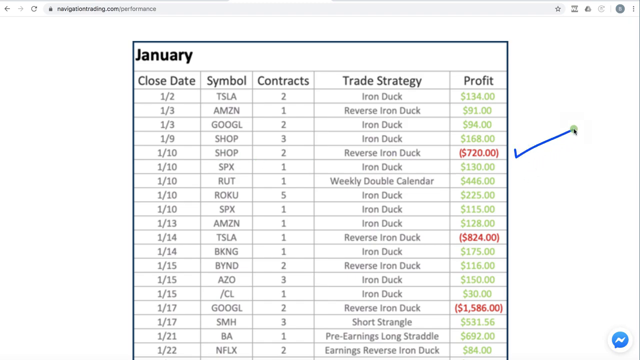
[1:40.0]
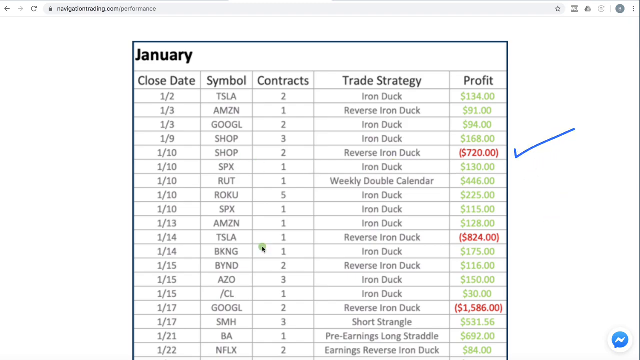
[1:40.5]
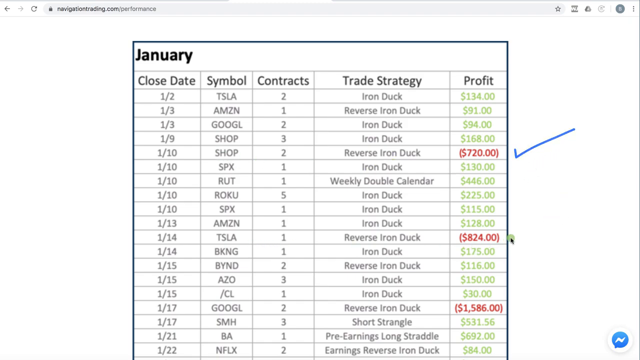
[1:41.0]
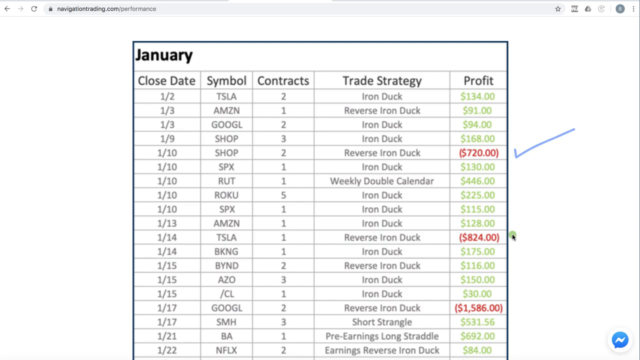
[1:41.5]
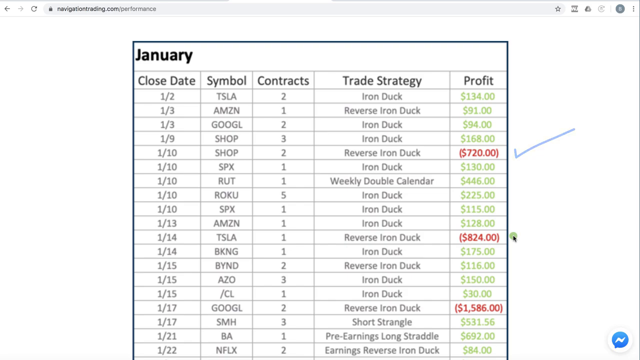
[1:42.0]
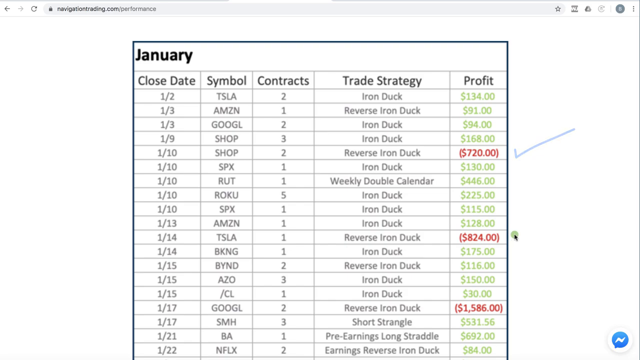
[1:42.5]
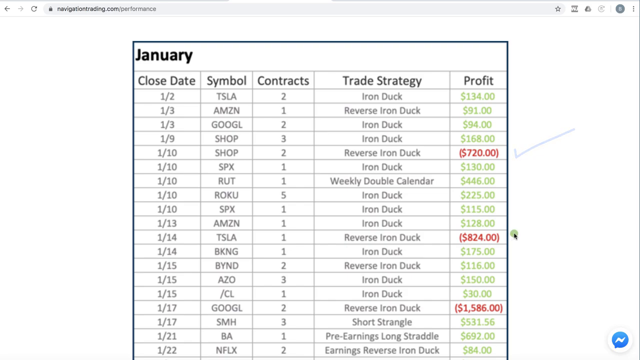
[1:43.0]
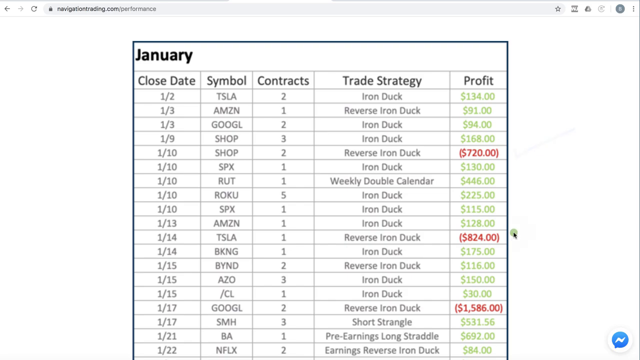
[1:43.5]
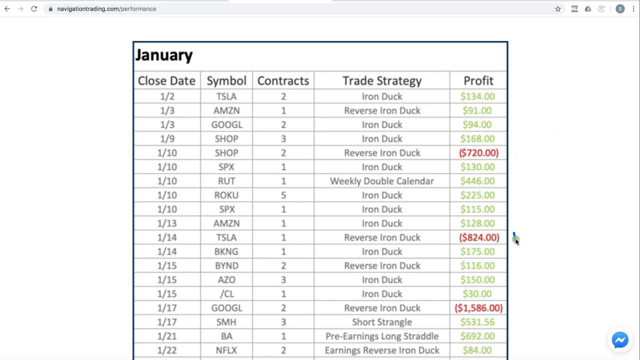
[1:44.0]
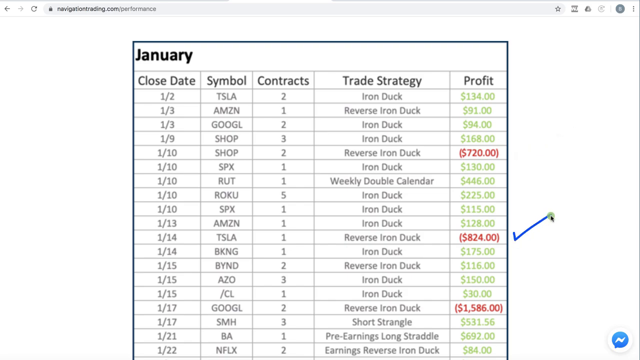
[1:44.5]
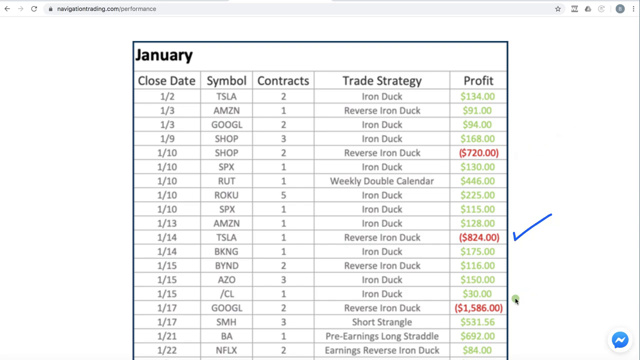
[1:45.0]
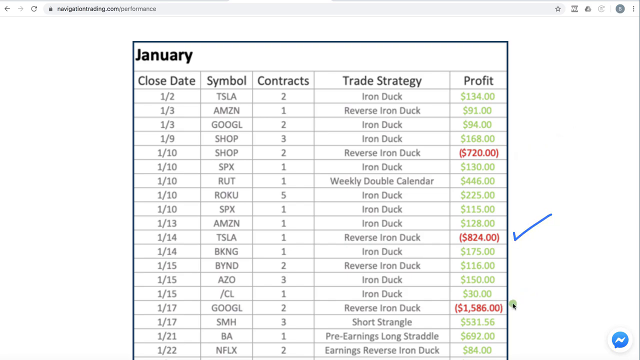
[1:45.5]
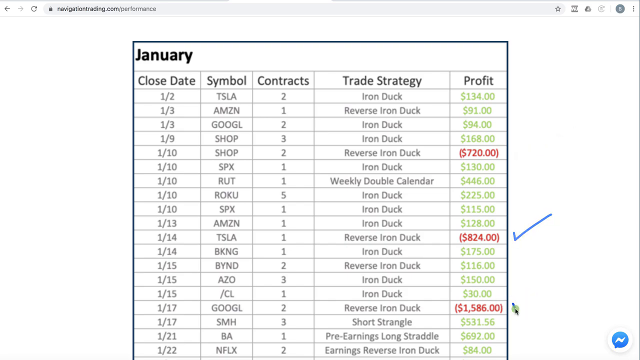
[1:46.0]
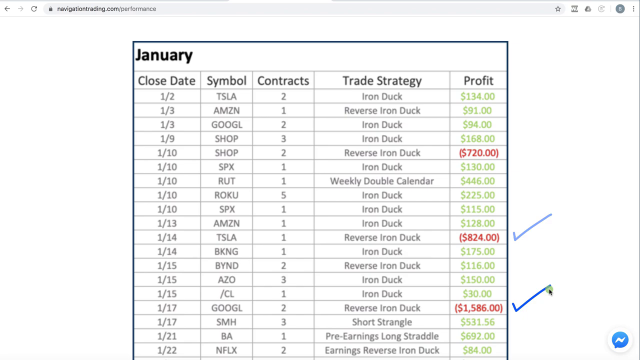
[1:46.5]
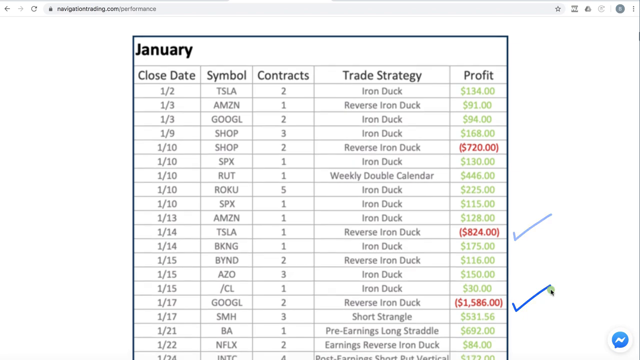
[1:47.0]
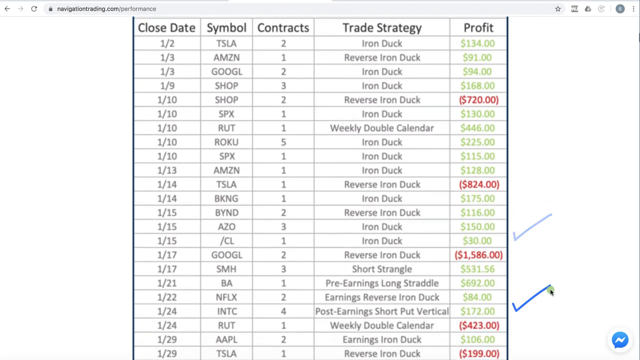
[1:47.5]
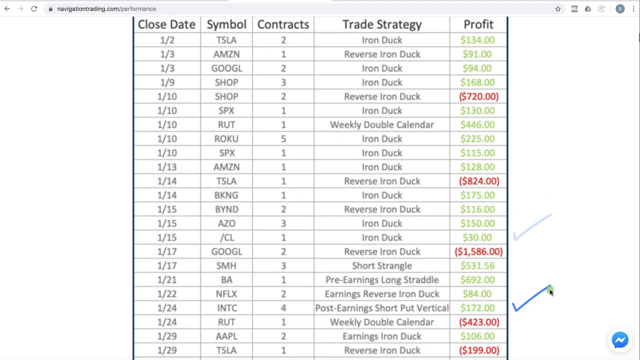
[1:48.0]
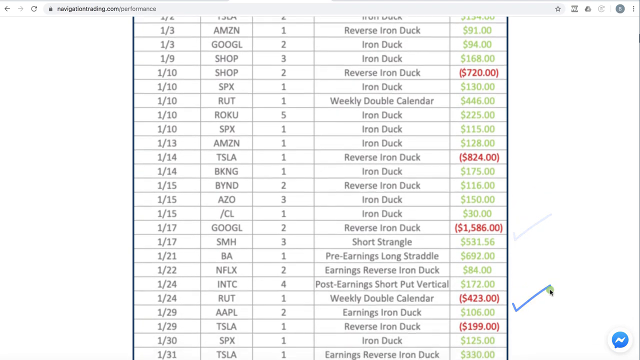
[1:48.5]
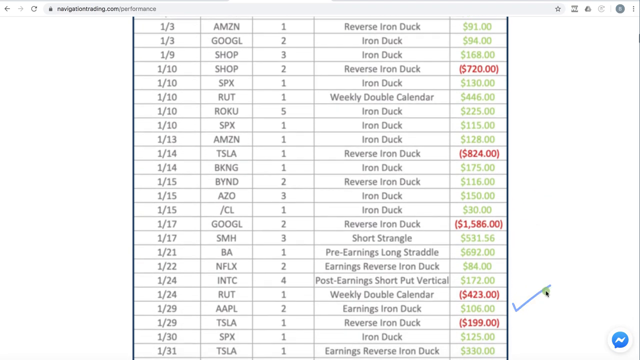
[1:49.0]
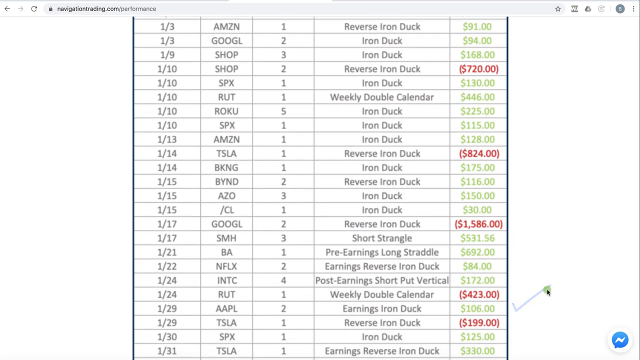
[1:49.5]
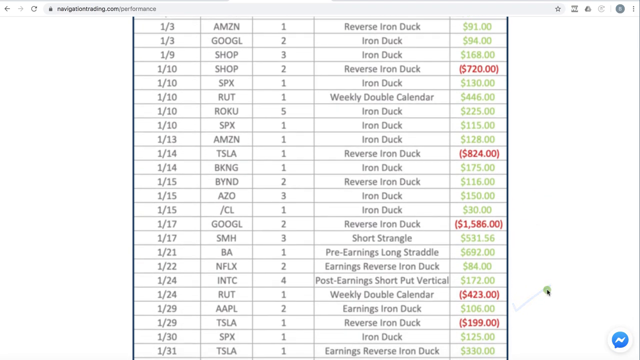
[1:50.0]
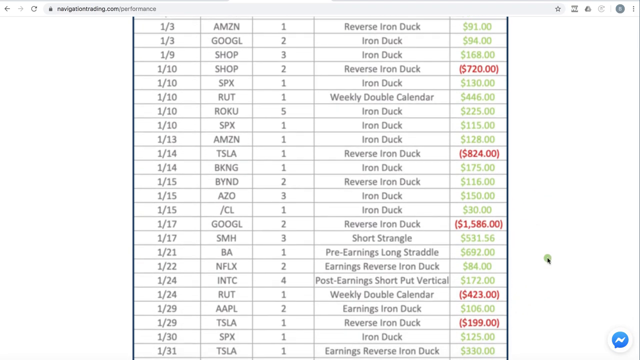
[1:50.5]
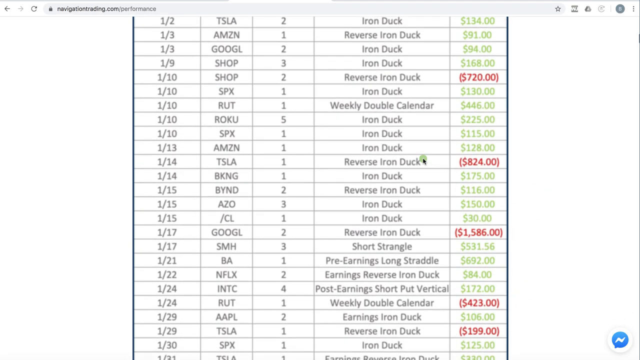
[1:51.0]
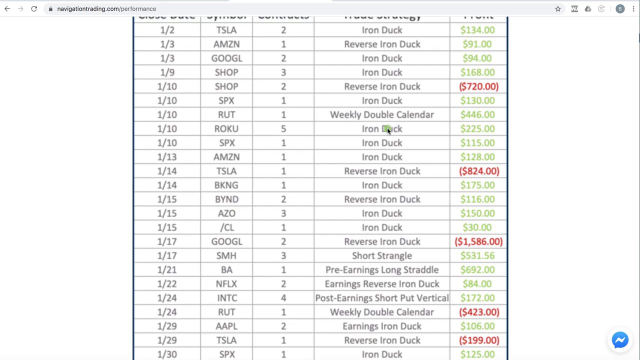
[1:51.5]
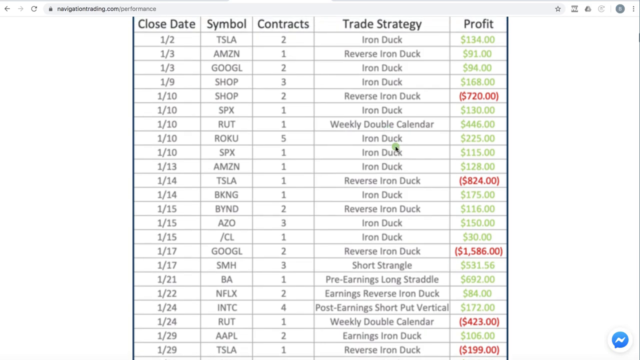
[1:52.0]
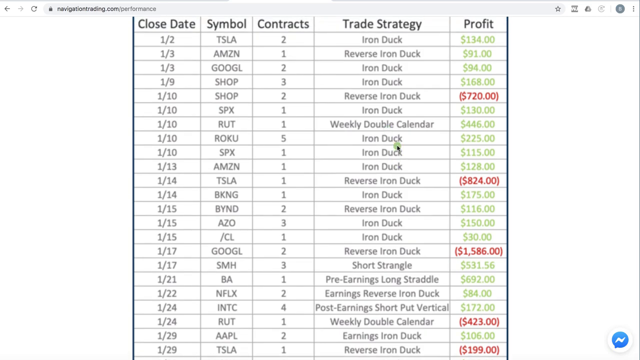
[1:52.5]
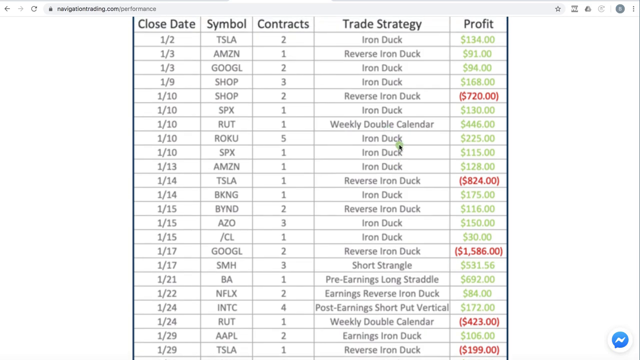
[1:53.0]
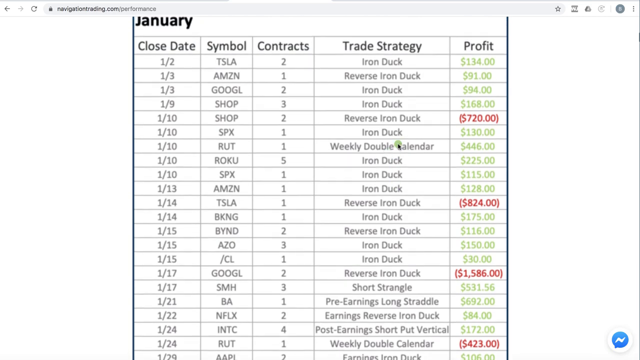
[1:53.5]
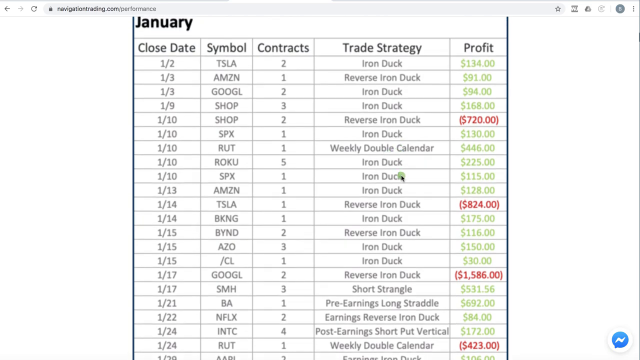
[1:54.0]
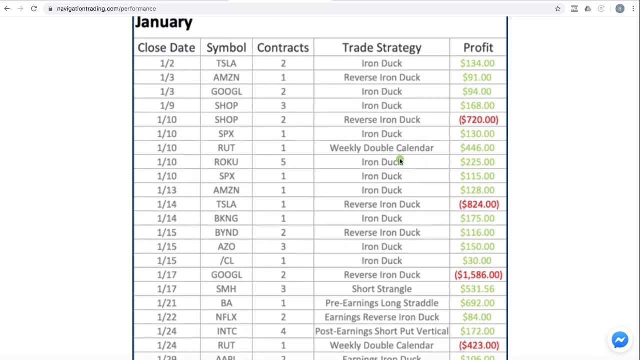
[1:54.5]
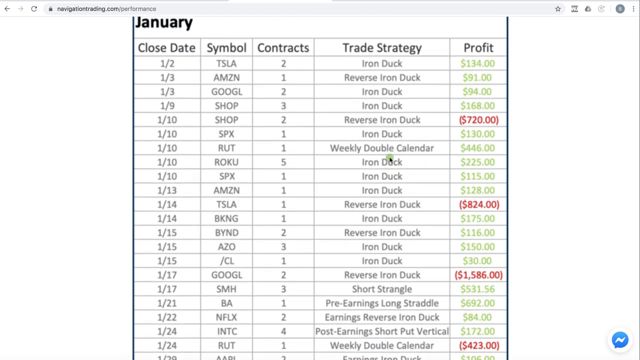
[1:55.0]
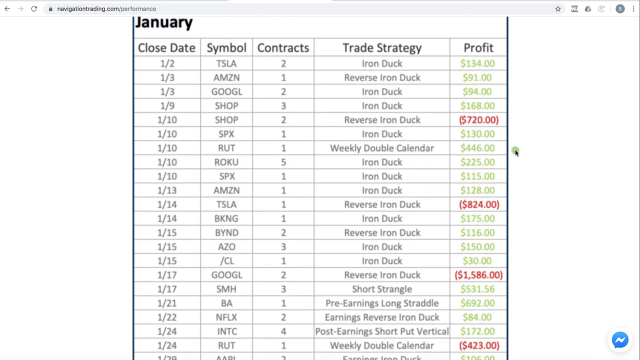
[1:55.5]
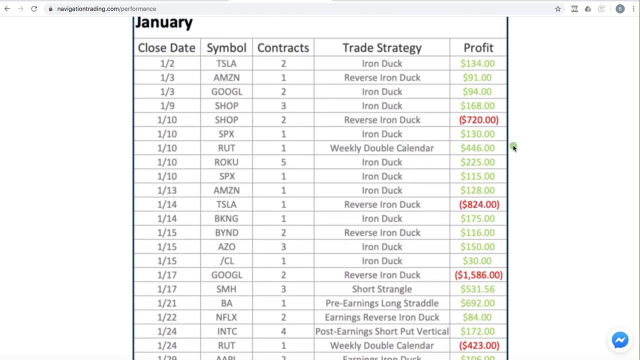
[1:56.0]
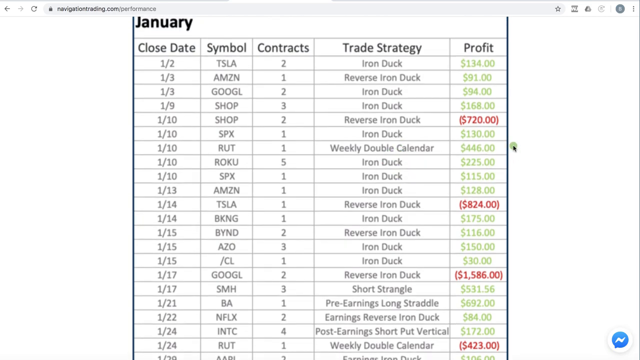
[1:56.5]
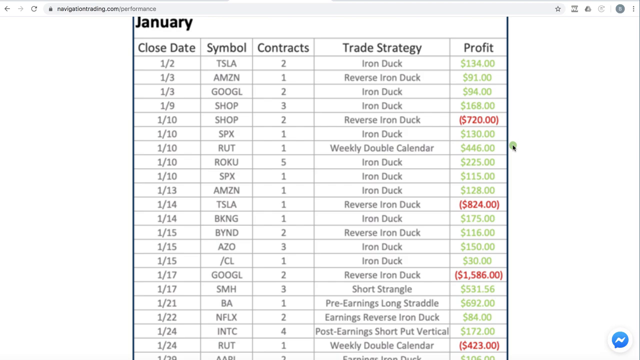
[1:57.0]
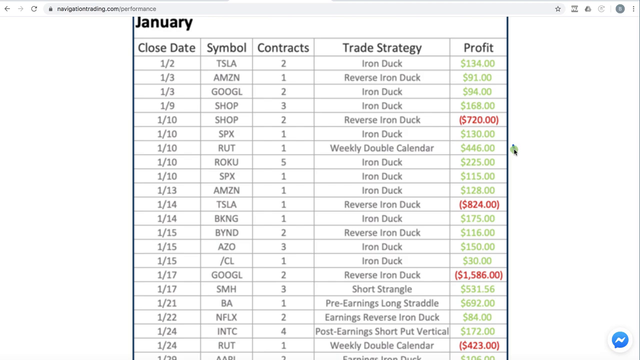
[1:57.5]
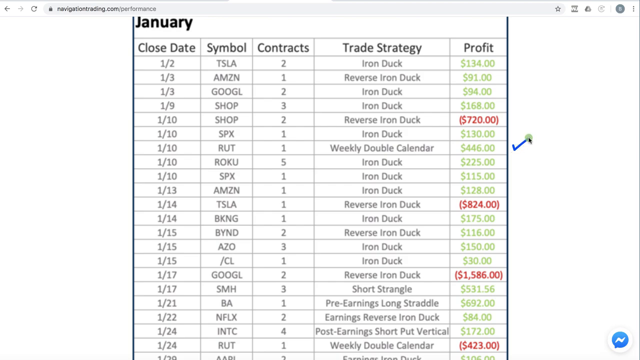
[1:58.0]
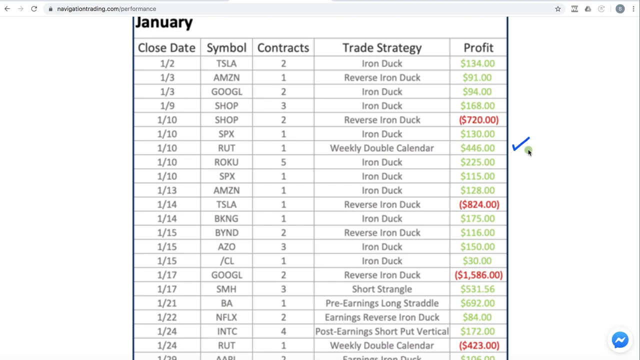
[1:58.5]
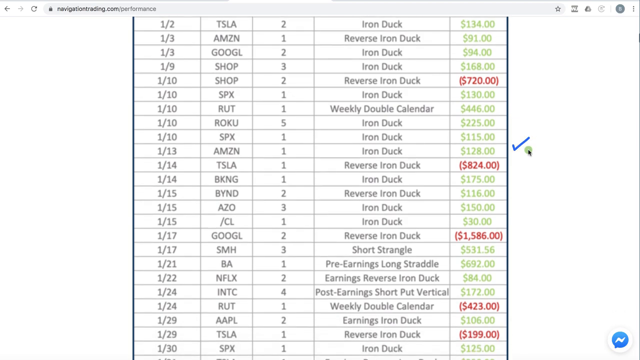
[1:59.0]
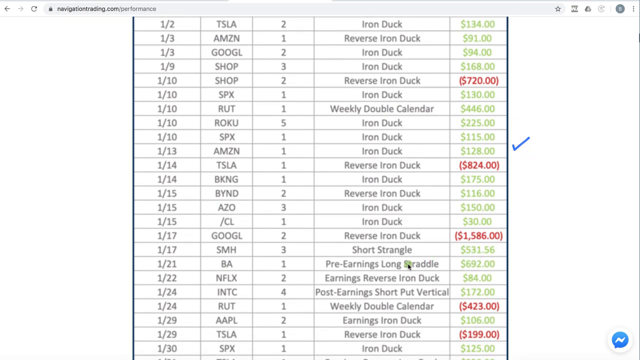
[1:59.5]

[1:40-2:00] Sections are shown as positive or negative in terms of profit, and the person going through them writes a blue check in areas that are negative. A trade strategy column lists iron dog and reverse iron dog, a contracts column shows the number of contracts used, and there are symbols and a close date for each trade, with closing profit shown for each.